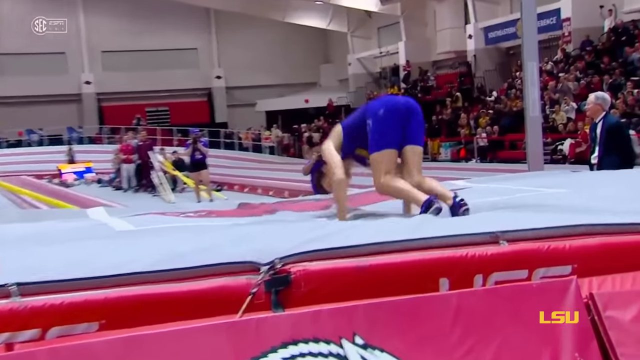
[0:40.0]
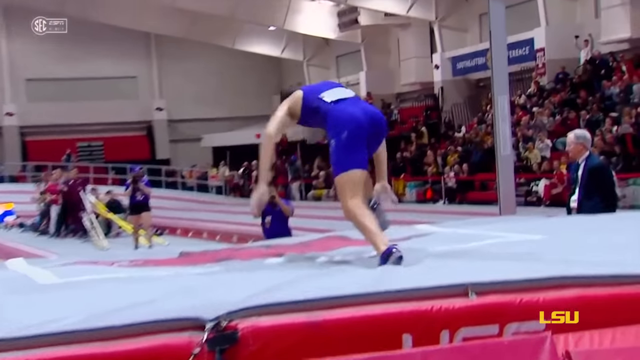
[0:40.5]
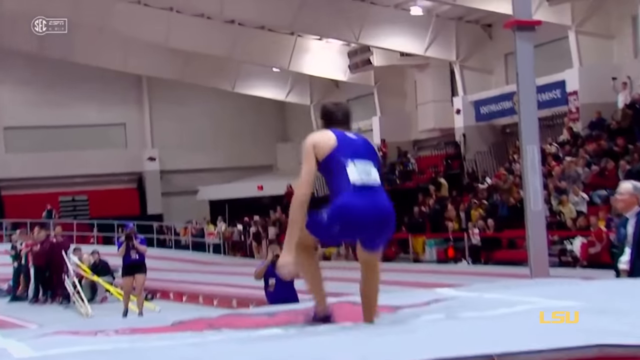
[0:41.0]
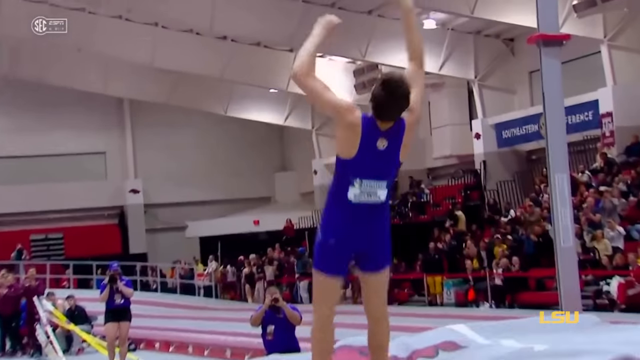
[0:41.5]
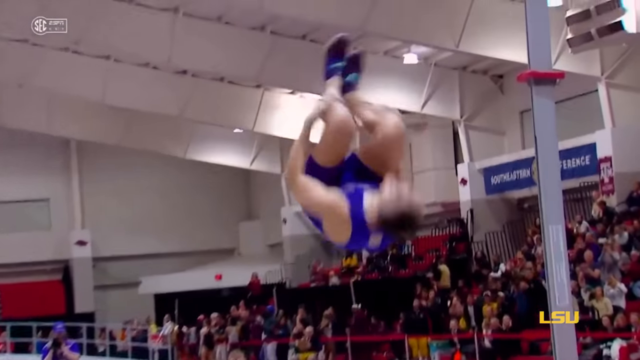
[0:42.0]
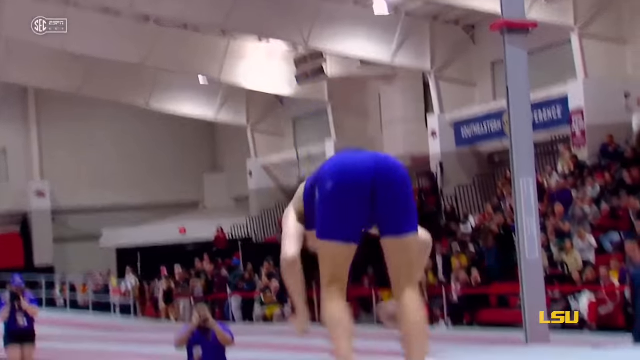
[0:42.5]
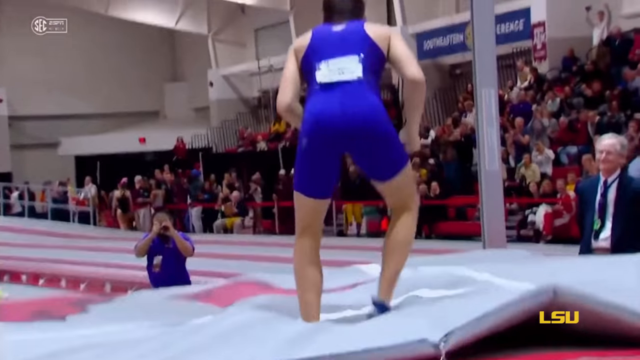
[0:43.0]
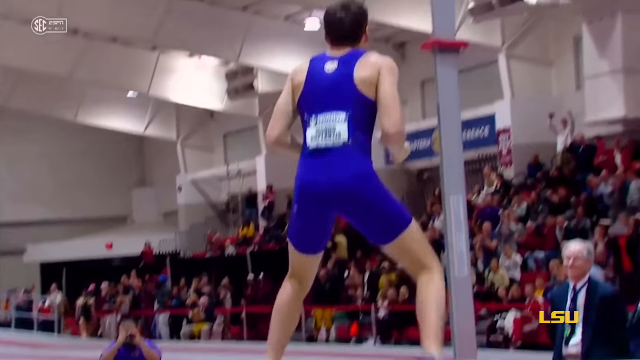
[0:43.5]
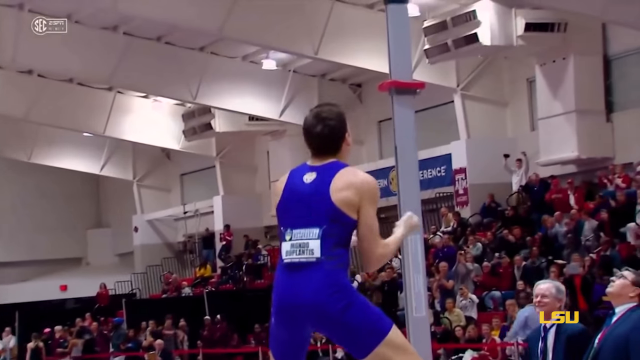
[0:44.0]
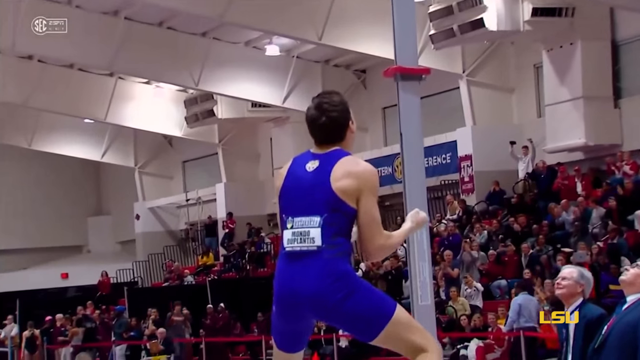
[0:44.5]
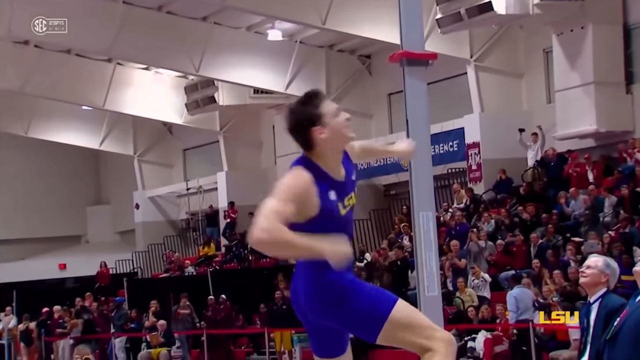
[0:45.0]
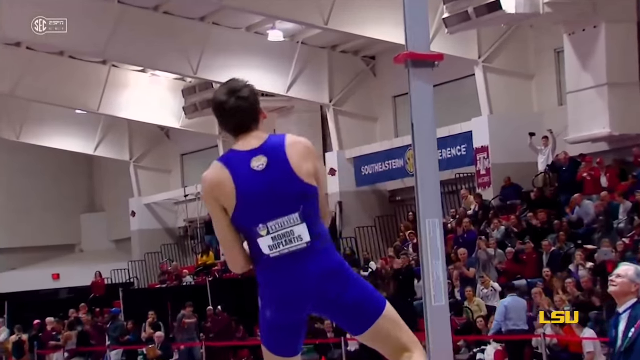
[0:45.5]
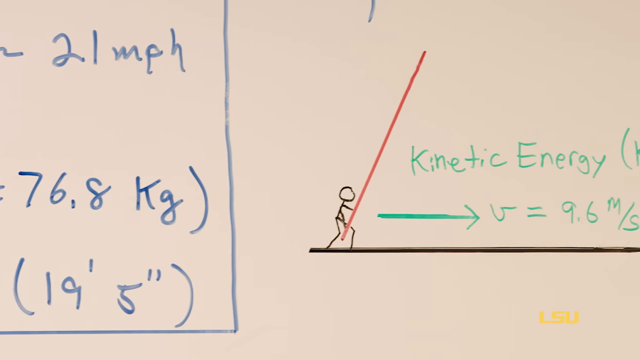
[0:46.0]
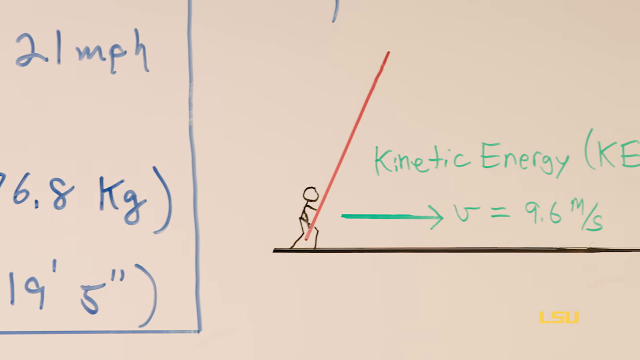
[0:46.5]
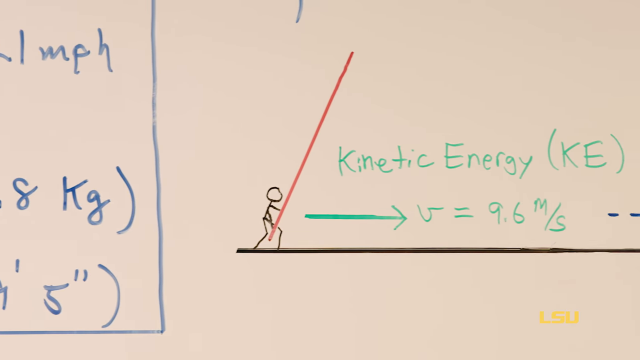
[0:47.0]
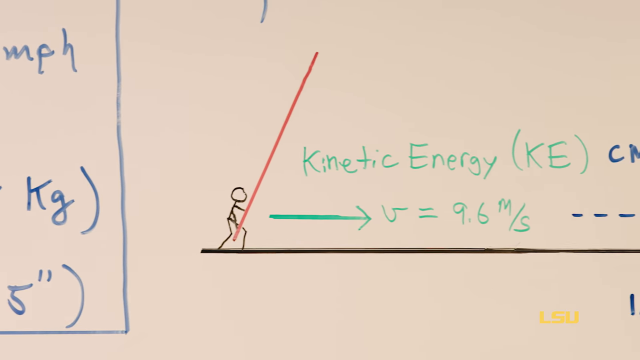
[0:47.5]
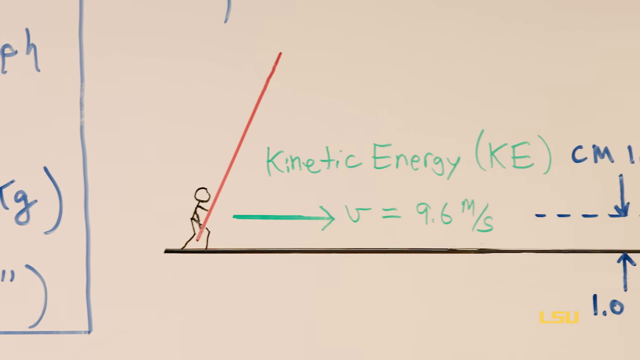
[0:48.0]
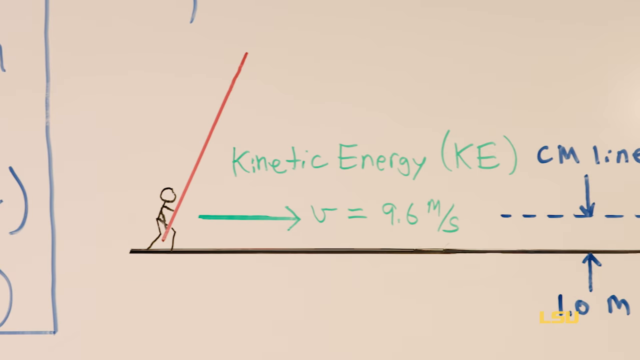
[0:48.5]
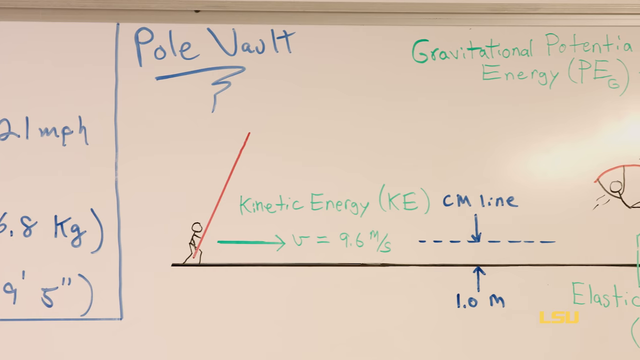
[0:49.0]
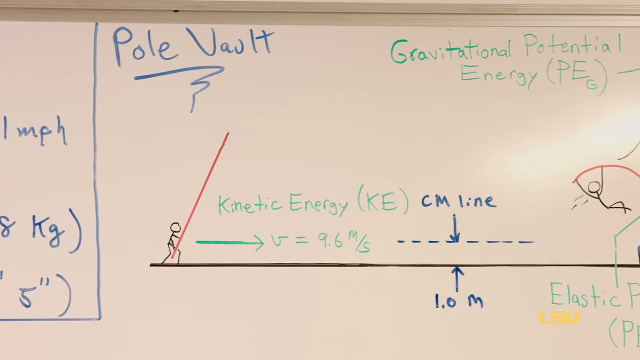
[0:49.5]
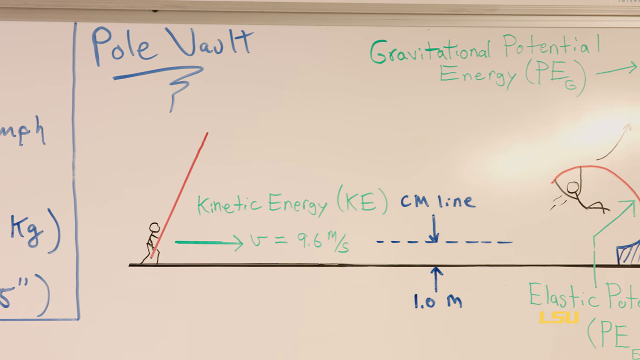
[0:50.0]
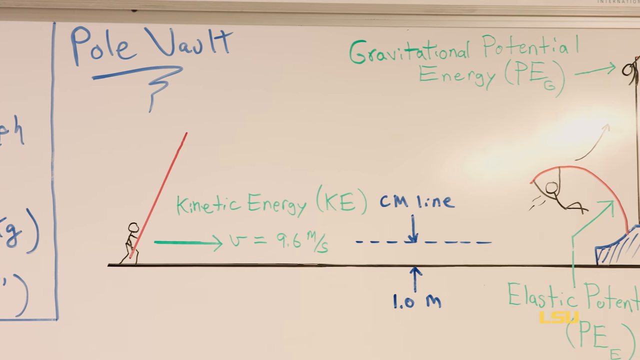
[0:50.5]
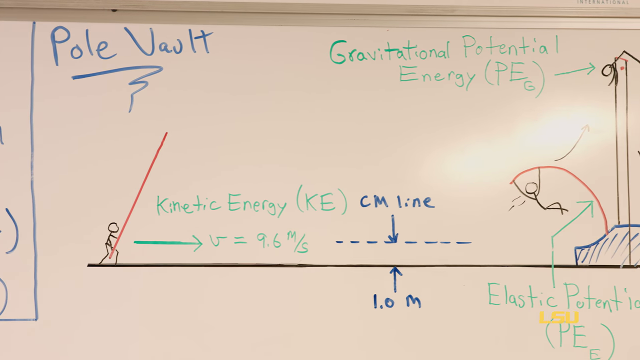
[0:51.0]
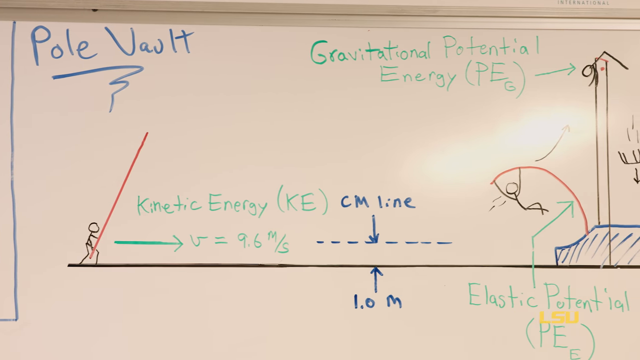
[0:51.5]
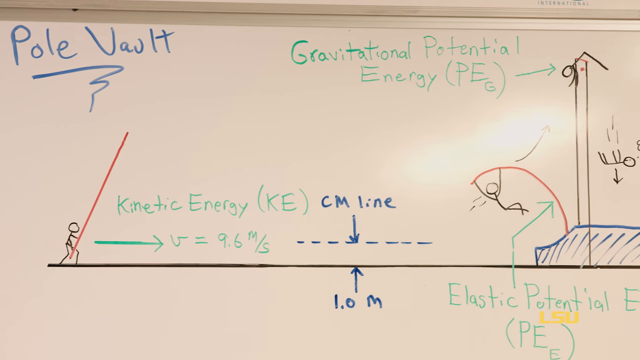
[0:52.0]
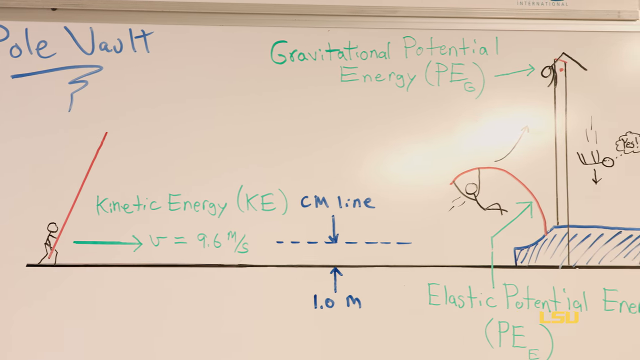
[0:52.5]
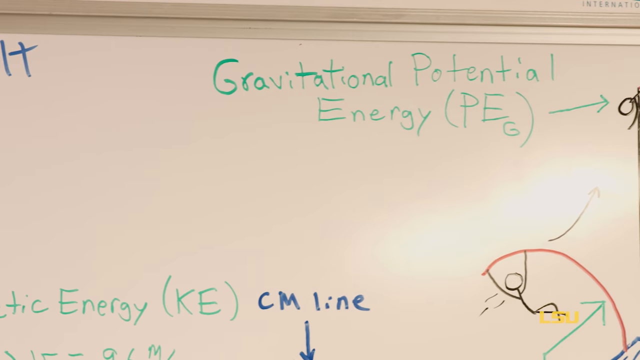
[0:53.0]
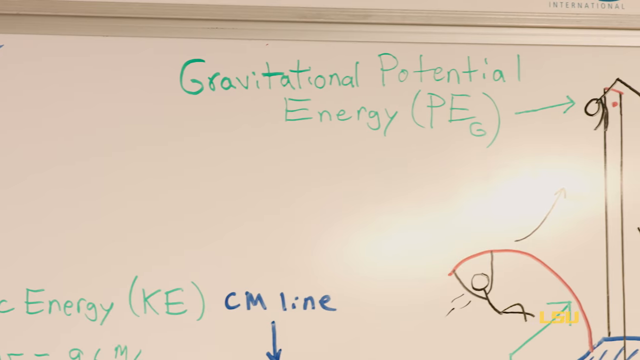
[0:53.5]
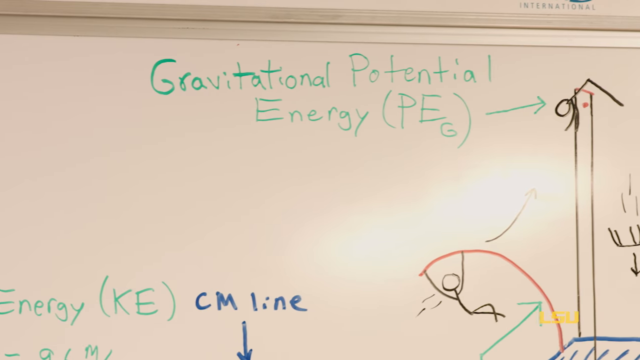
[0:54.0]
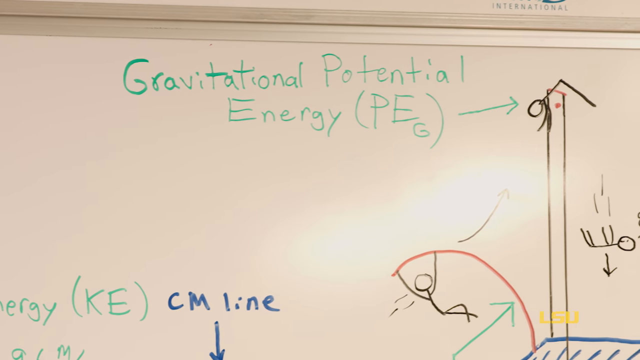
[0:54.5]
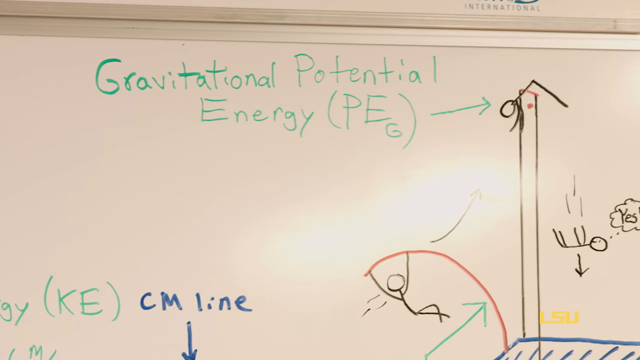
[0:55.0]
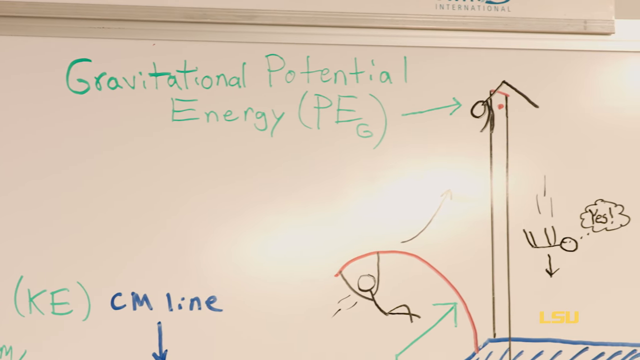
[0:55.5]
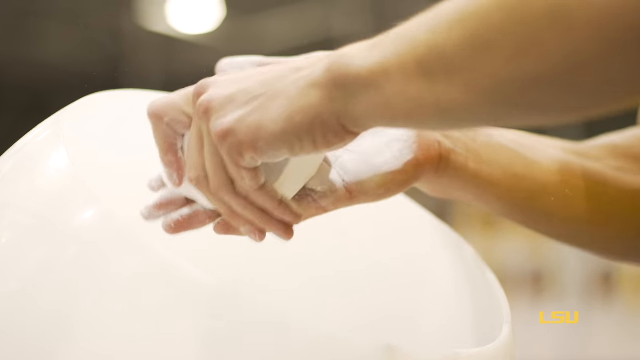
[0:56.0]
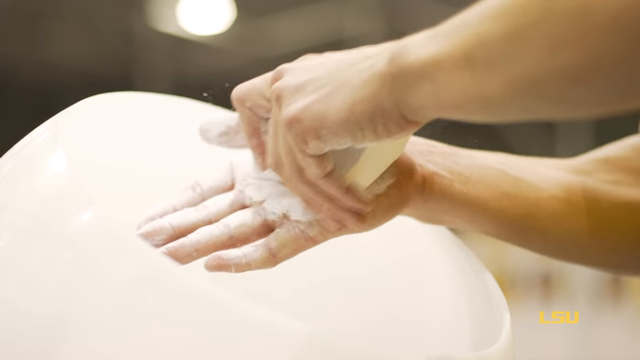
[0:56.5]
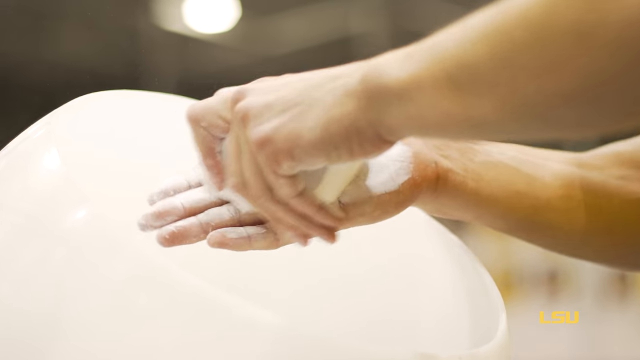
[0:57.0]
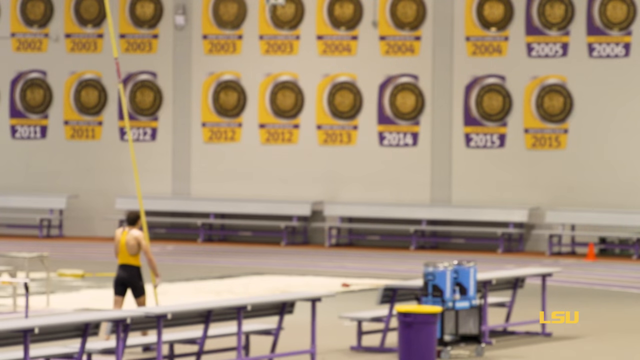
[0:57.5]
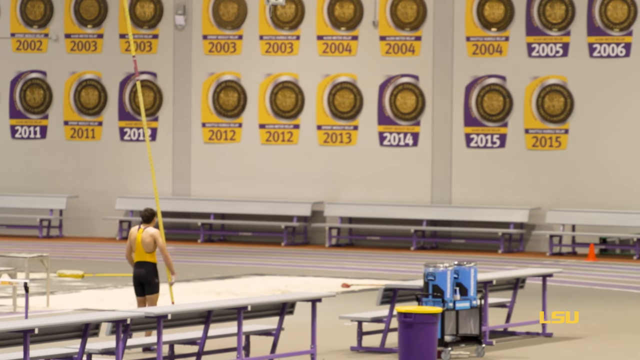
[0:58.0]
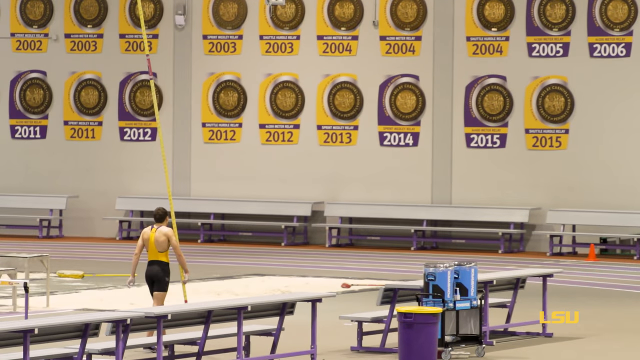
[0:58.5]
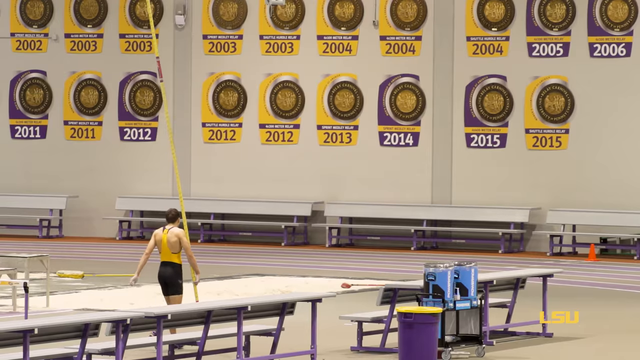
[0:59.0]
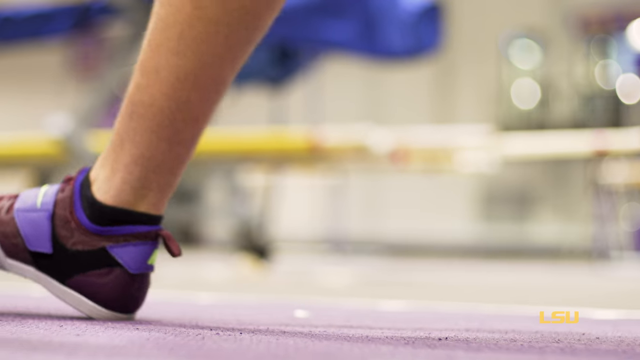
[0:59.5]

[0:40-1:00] The athlete celebrates with a backflip and is ecstatic, doing fist bumps and yelling into the crowd. Some mathematics of pole vaulting is shown on a whiteboard with a diagram of the math behind the kinetic energy that goes into the pole vault, the elastic potential energy as he bends the pole, and the gravitational potential energy as he flies up in the air. The vaulter uses chalk dust to grip more easily. A shot shows banners on the wall indicating LSU has won years of pole vaulting championships.